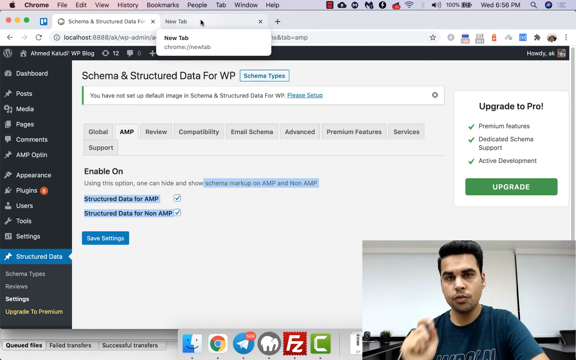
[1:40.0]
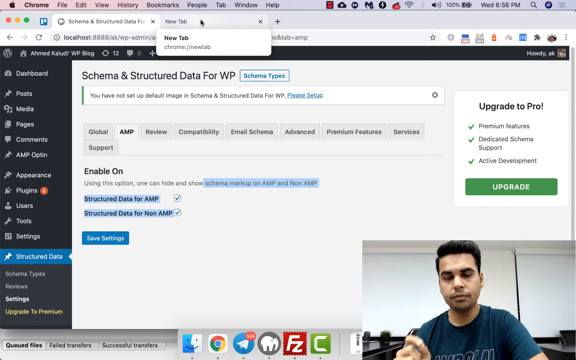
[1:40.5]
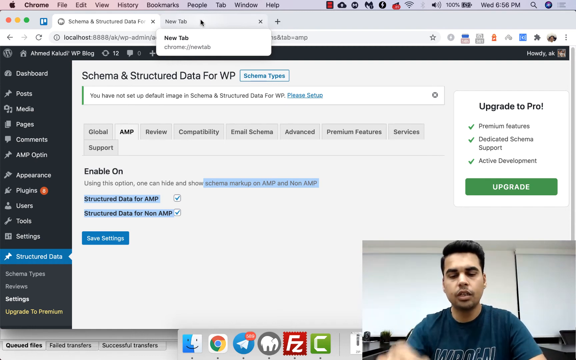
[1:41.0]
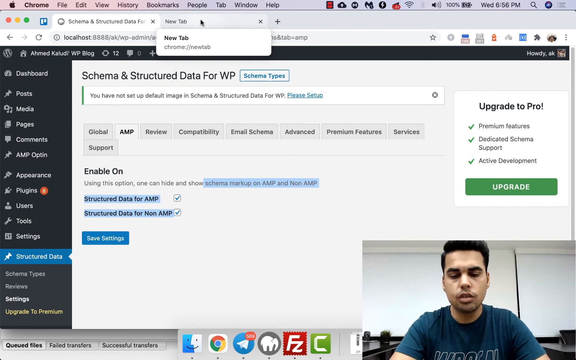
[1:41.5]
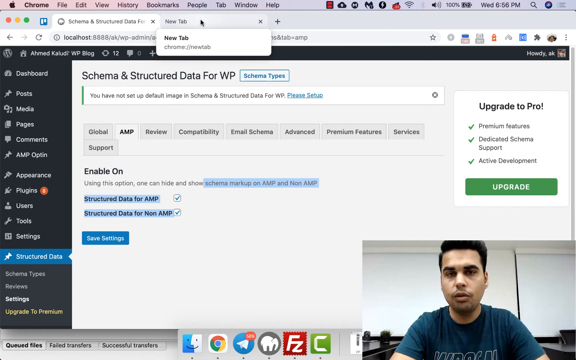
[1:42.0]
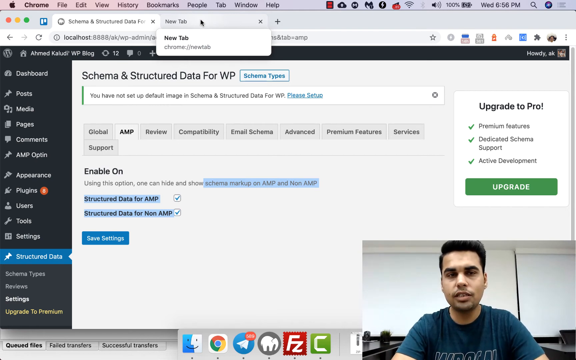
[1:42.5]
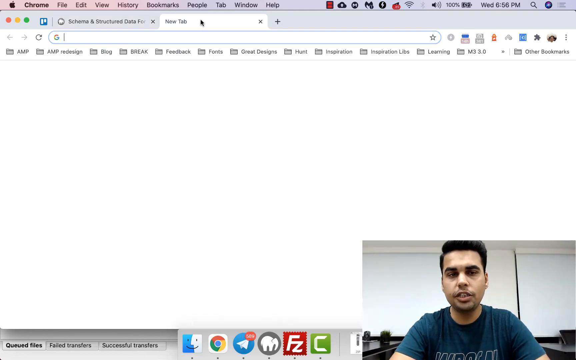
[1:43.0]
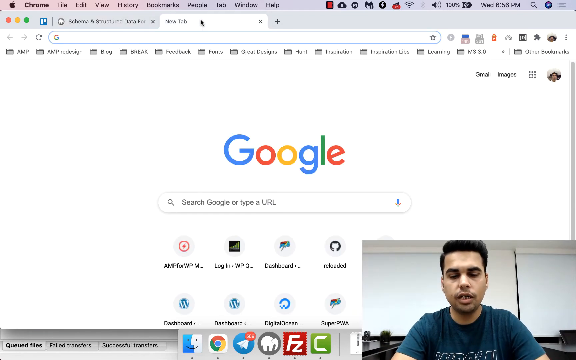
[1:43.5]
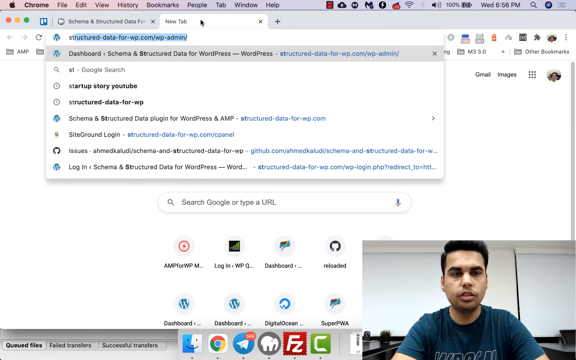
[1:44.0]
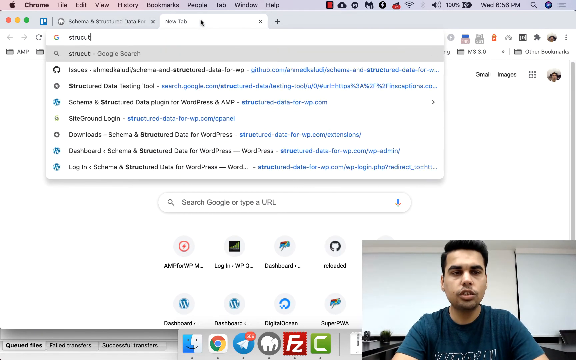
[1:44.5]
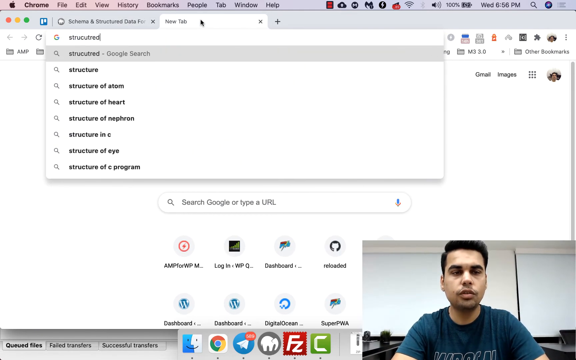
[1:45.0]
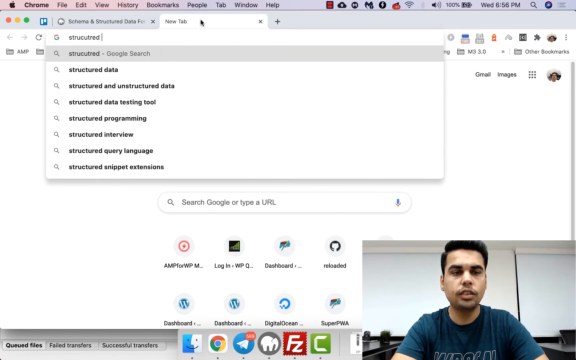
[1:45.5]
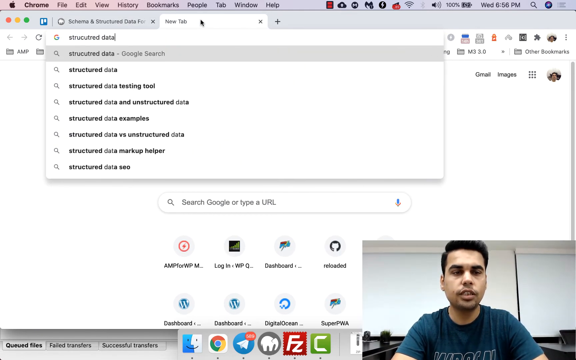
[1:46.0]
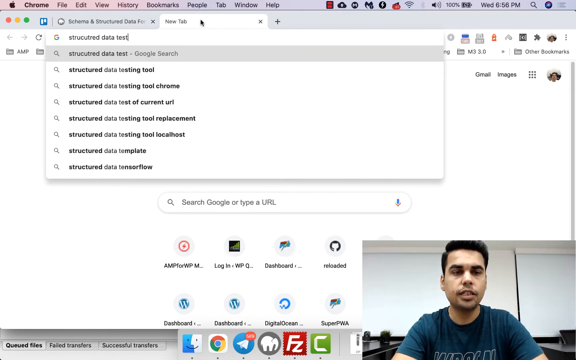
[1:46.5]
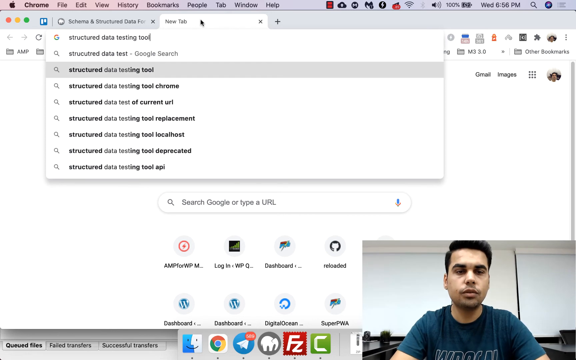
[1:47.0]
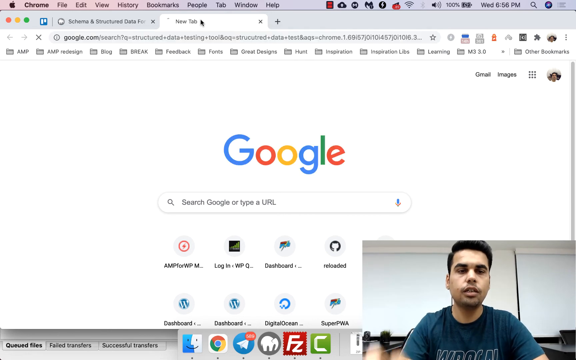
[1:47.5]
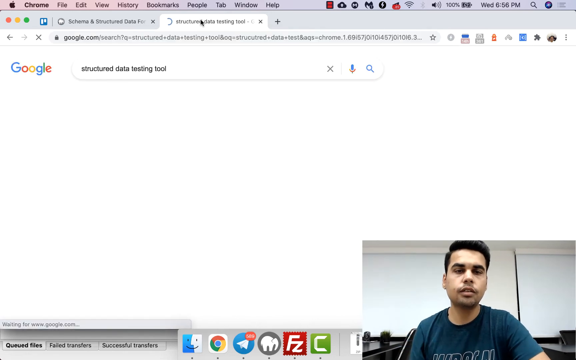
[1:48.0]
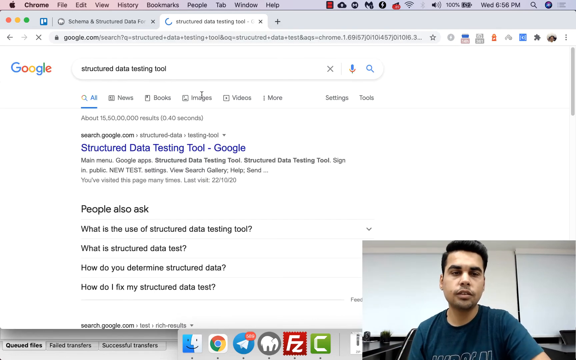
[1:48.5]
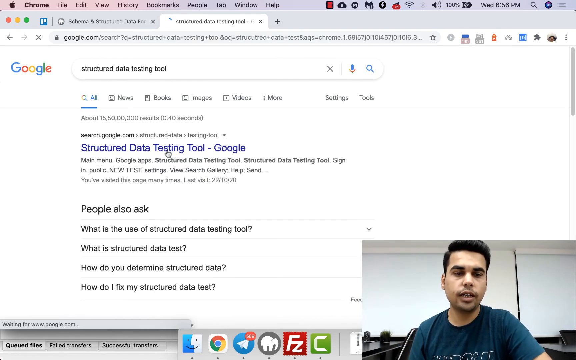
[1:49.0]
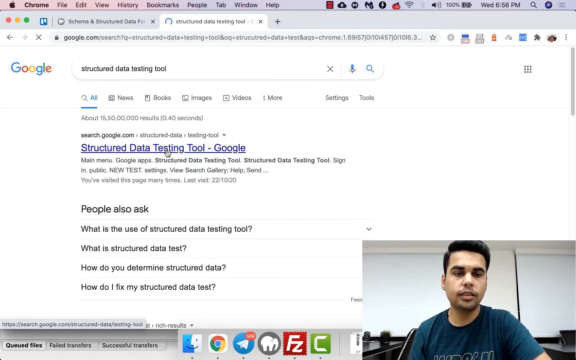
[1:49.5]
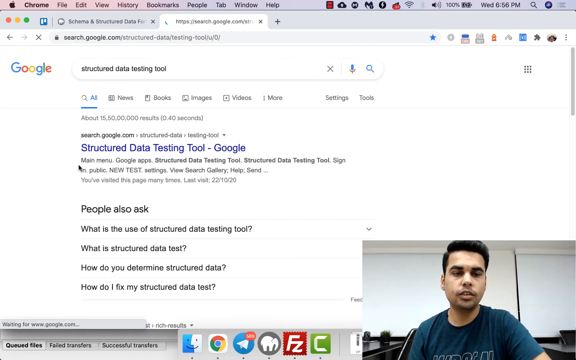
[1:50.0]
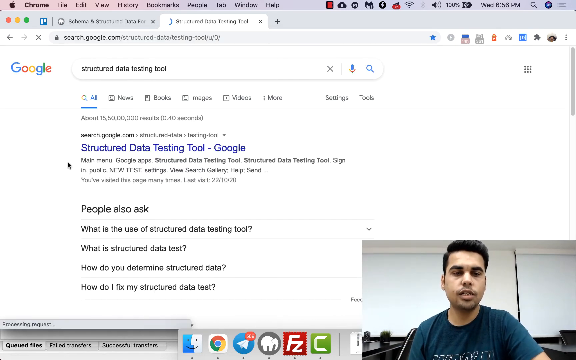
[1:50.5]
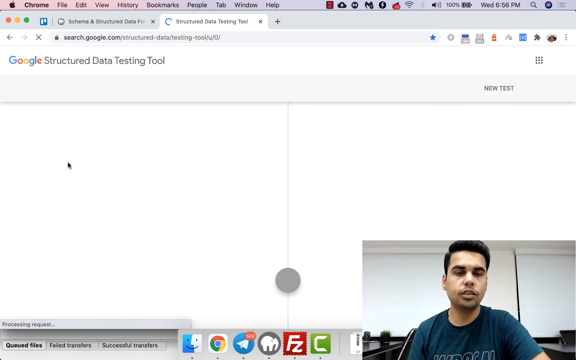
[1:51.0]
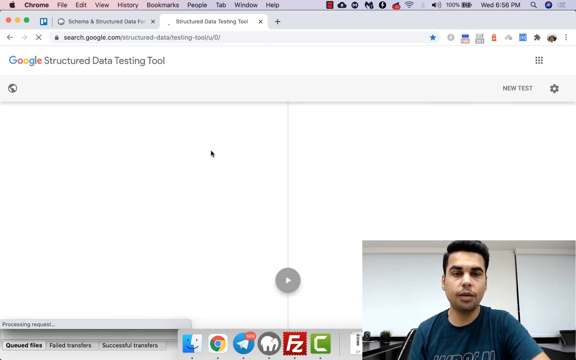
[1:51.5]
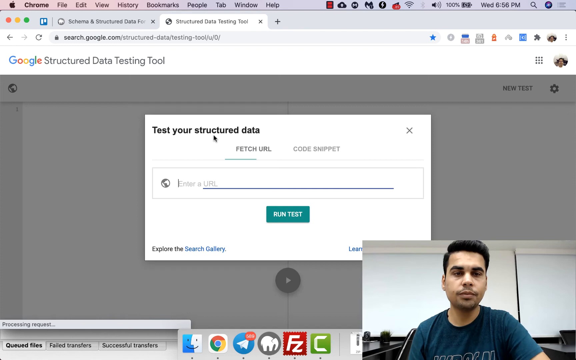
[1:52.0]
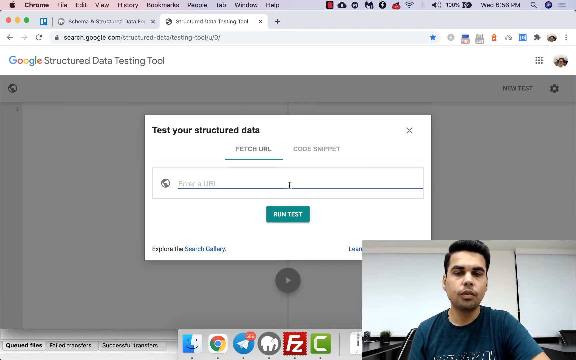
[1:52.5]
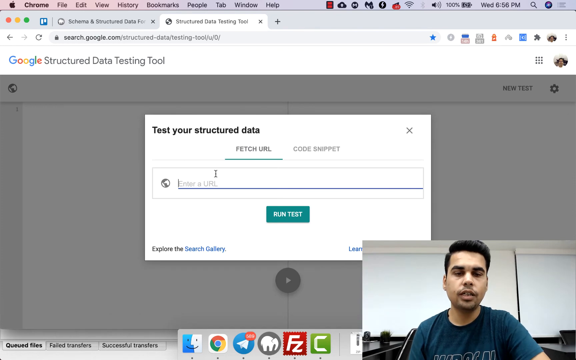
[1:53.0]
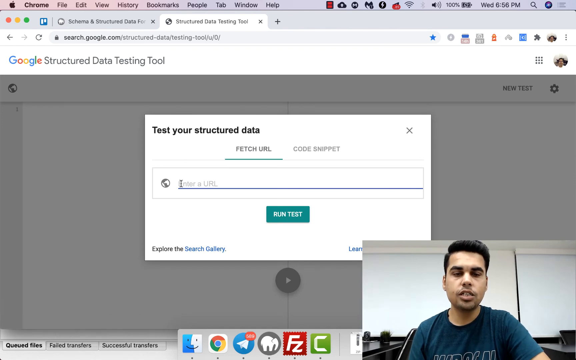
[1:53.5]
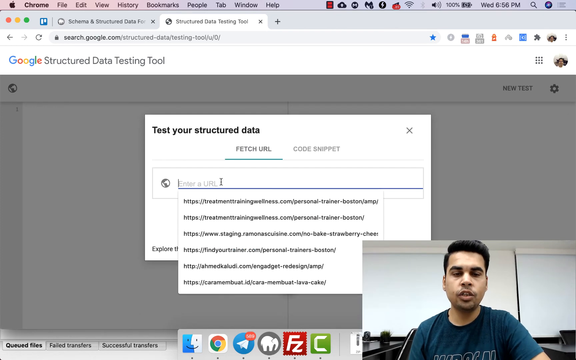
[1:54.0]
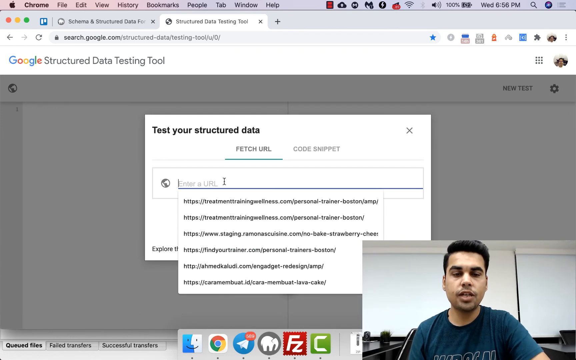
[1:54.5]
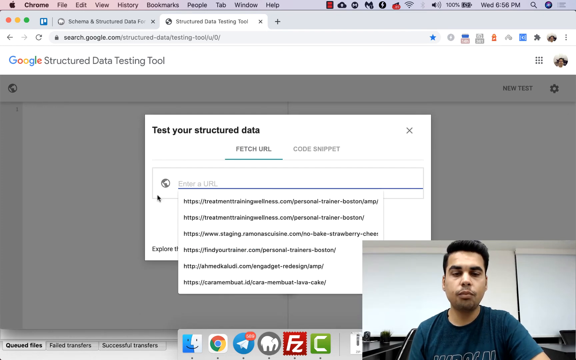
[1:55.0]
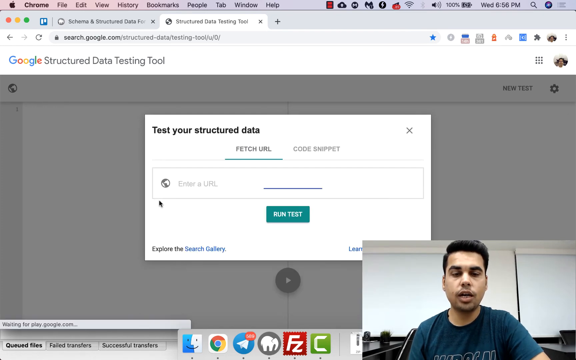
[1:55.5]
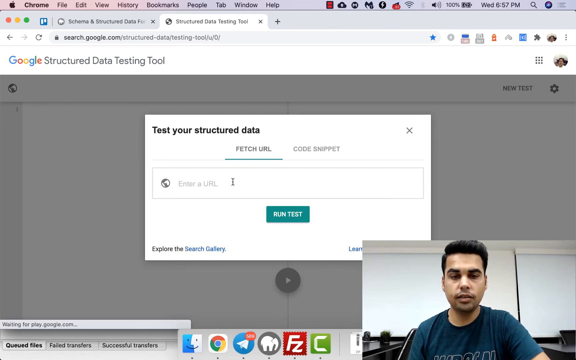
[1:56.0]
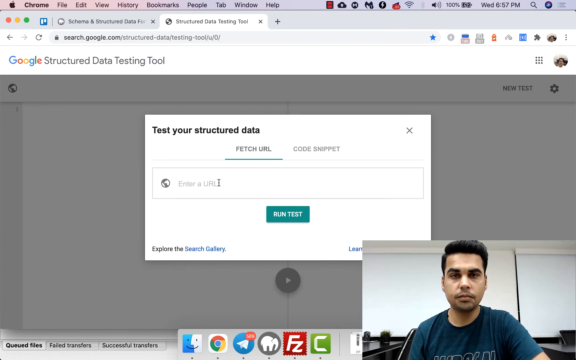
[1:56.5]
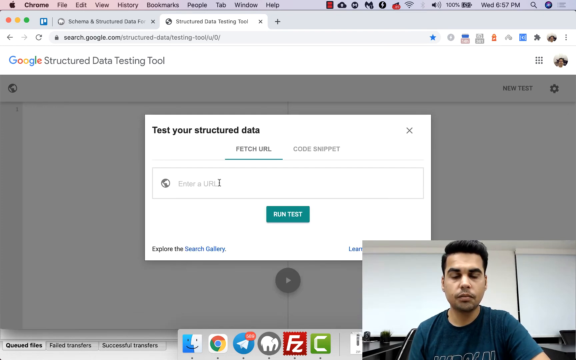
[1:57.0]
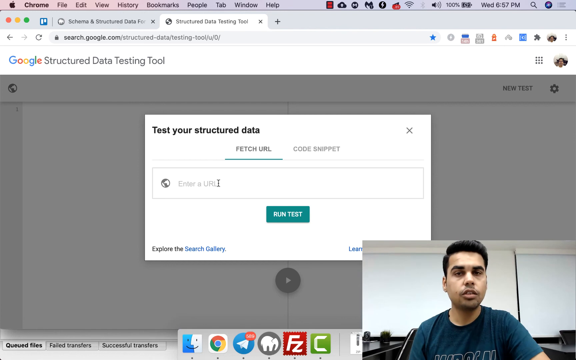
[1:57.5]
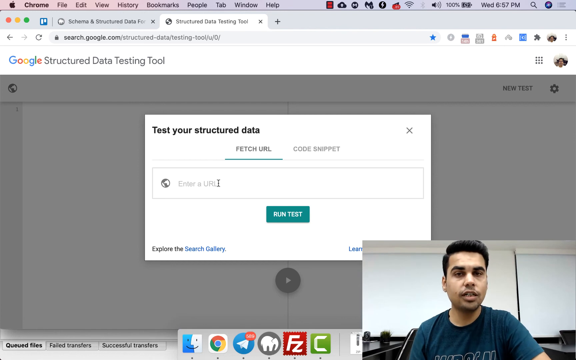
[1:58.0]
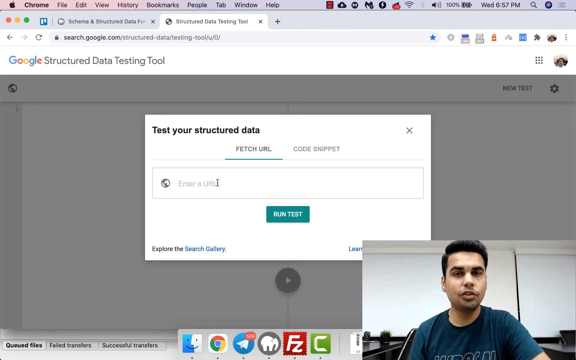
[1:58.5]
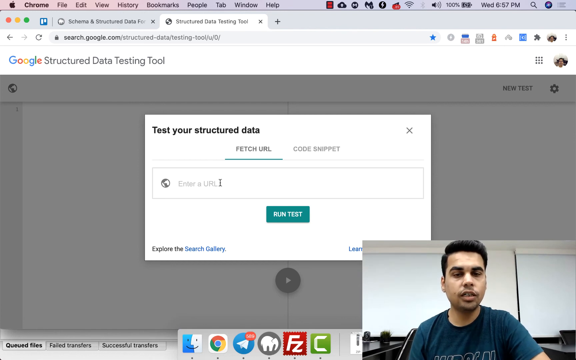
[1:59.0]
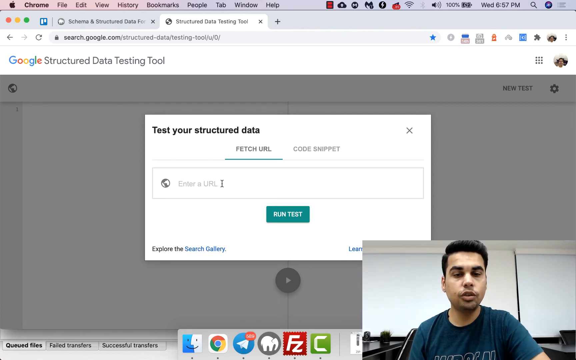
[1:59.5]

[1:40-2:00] Speaking to the camera, he opens a new tab in the Google Chrome browser and searches for structured data testing tool. He clicks on the first result, which says "structured data testing tool Google", and the page opens with a pop-up that says "test your structured data", offering a fetch URL option and a code snippet option. He goes into the enter URL option, wiggles his mouse over it, and continues speaking to the camera. At the bottom left of the pop-up it says "explore the search gallery", and there is a learn more button at the bottom right. Beyond the pop-up, at the top right, there is a new test button and a settings button, and behind it is a text editor meant for entering code or data. It is blank, with only one row, and it says "row one".